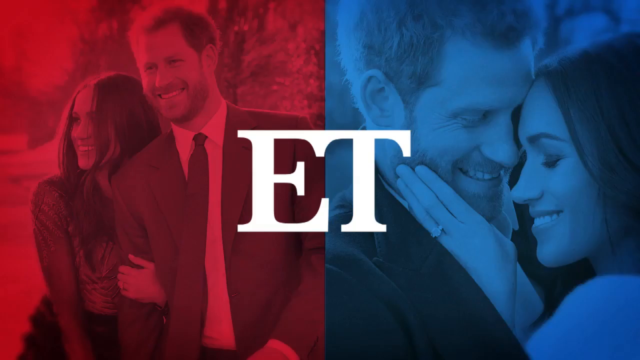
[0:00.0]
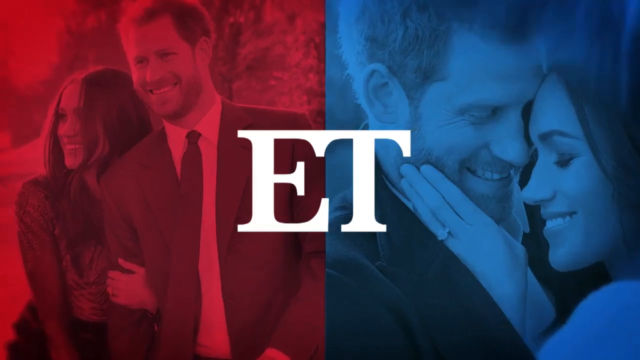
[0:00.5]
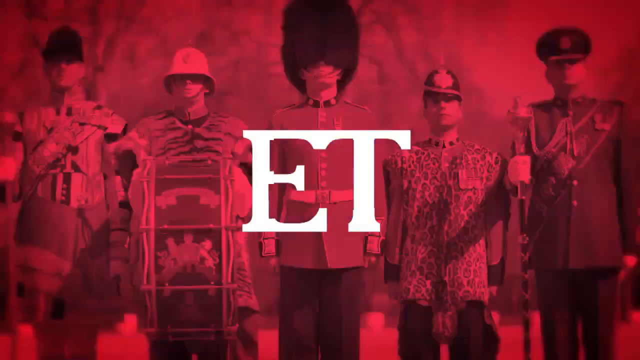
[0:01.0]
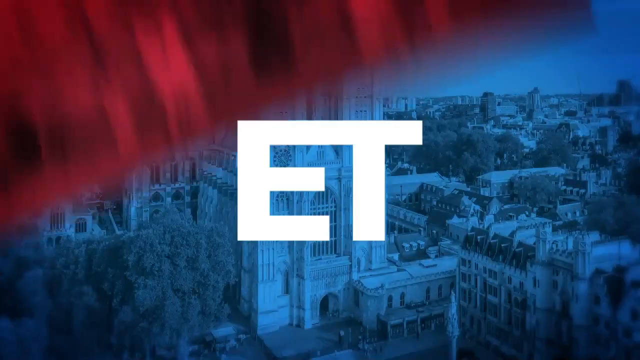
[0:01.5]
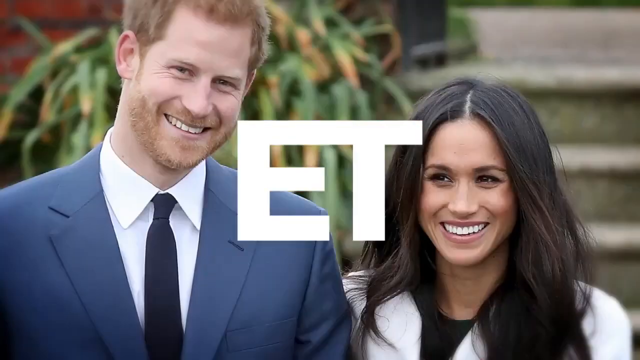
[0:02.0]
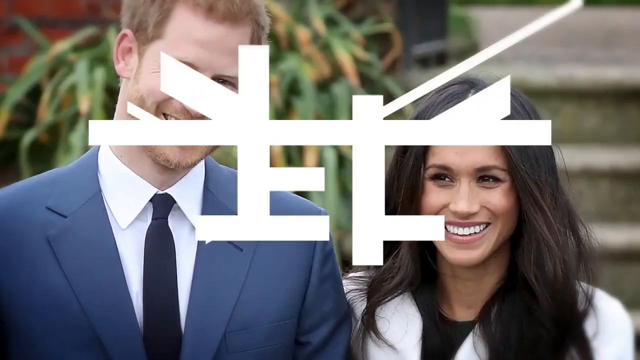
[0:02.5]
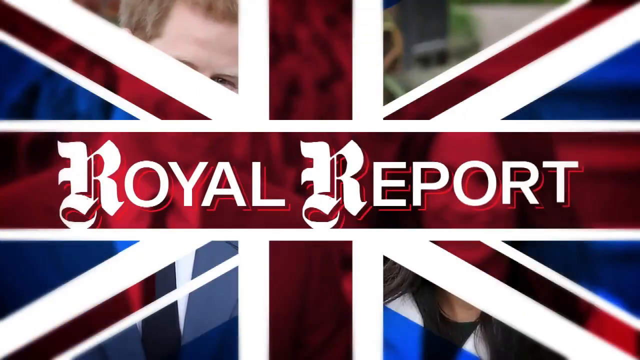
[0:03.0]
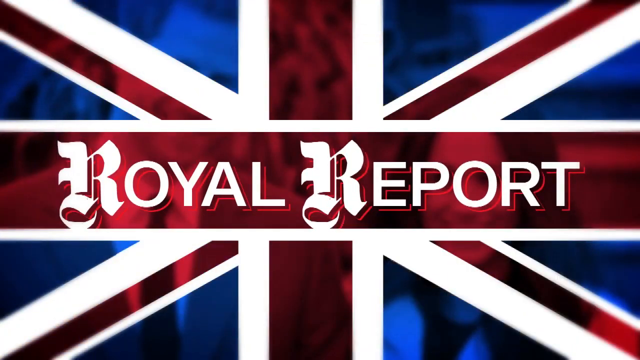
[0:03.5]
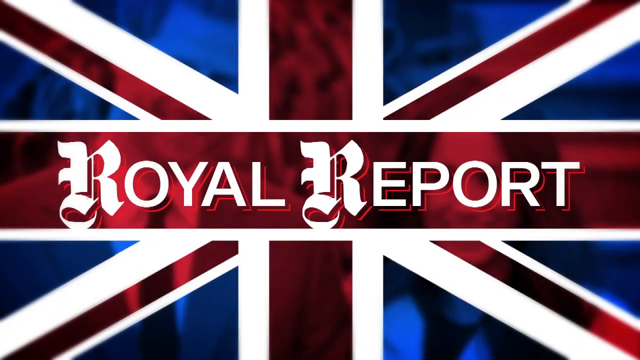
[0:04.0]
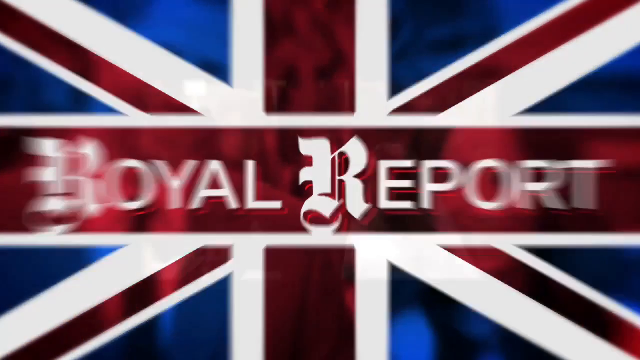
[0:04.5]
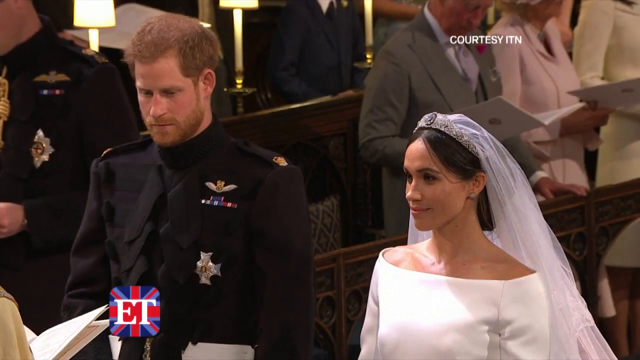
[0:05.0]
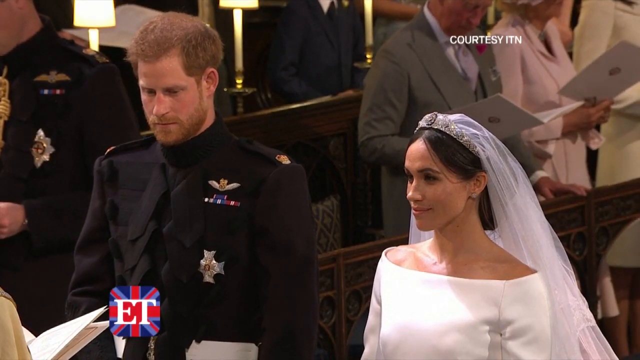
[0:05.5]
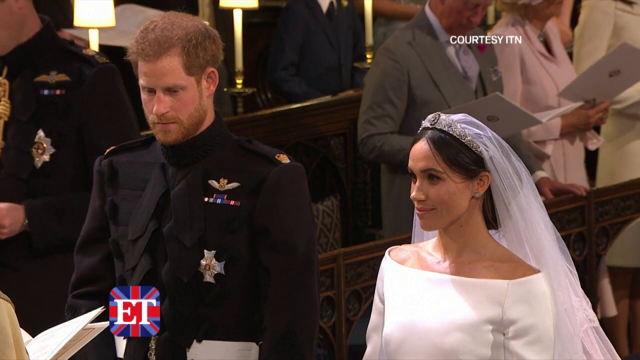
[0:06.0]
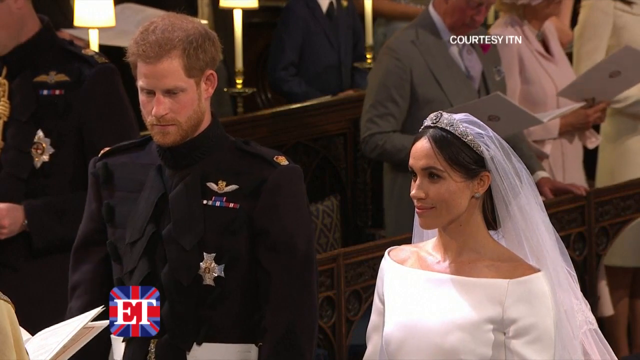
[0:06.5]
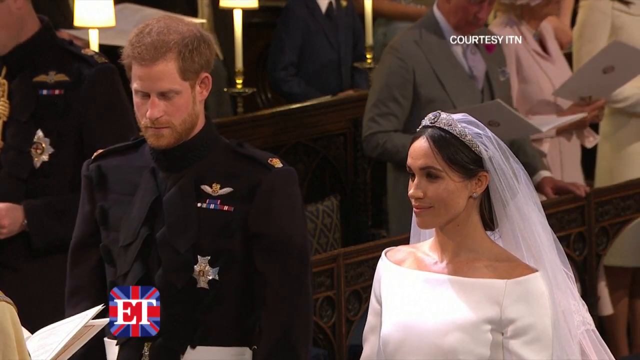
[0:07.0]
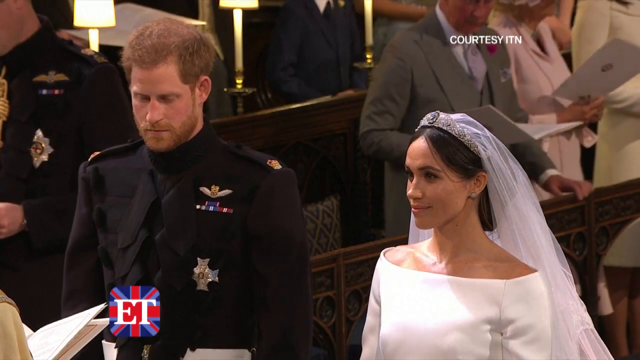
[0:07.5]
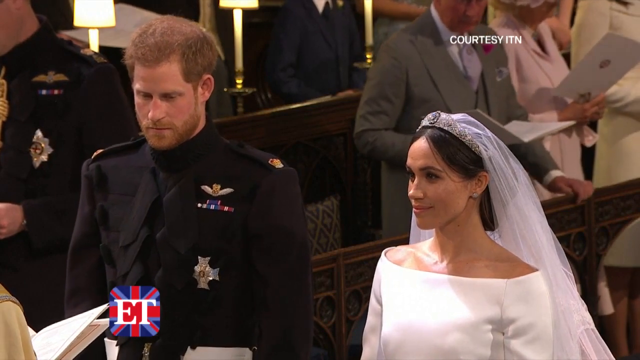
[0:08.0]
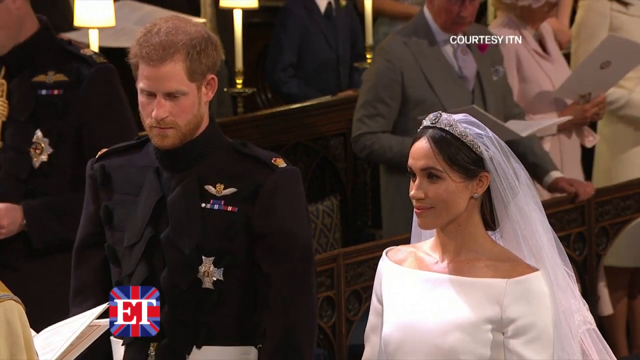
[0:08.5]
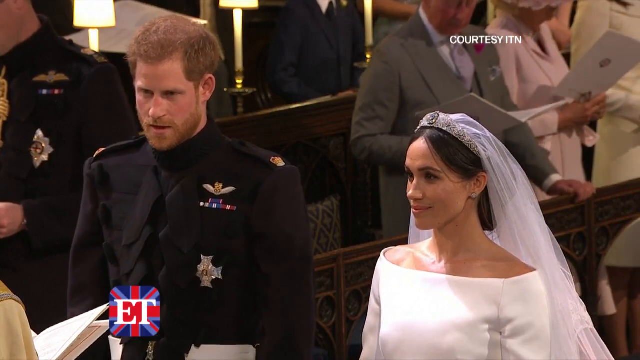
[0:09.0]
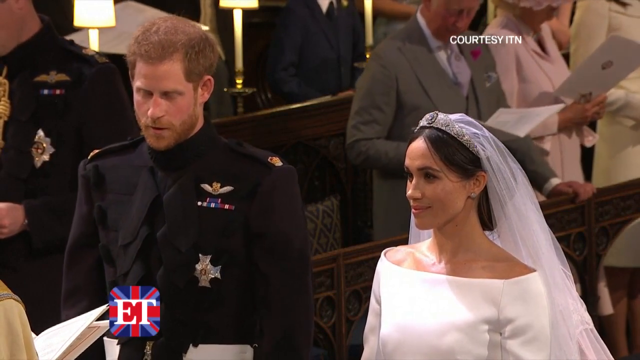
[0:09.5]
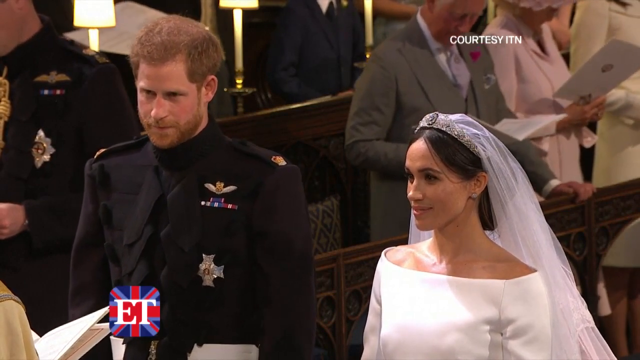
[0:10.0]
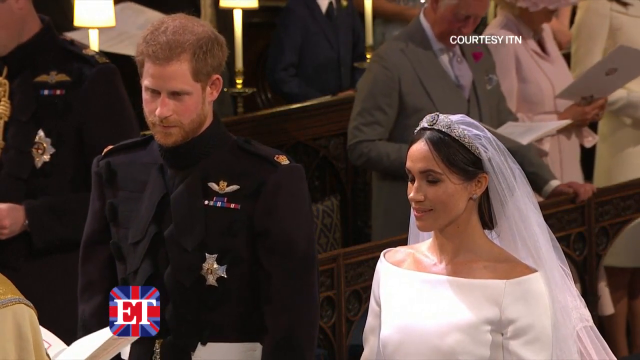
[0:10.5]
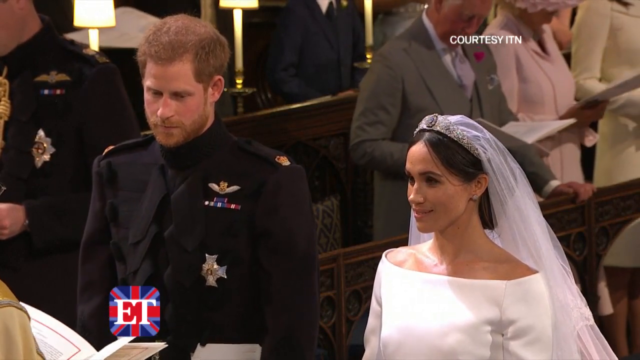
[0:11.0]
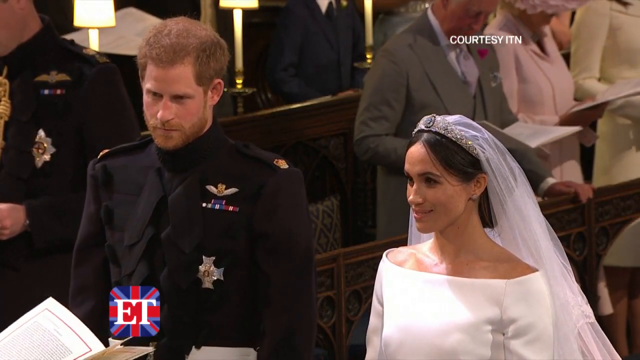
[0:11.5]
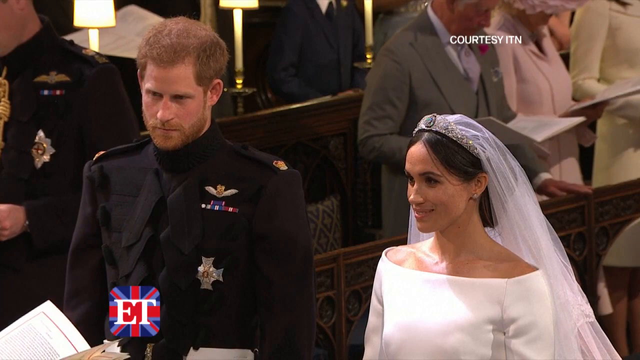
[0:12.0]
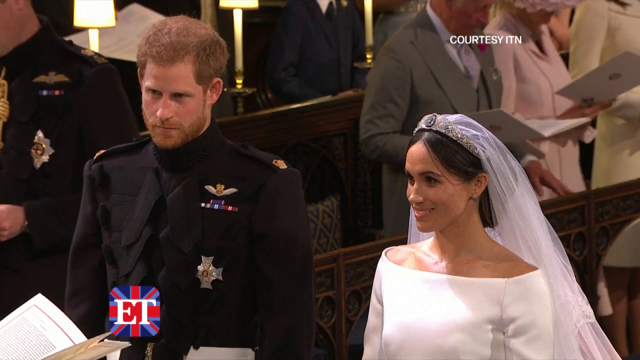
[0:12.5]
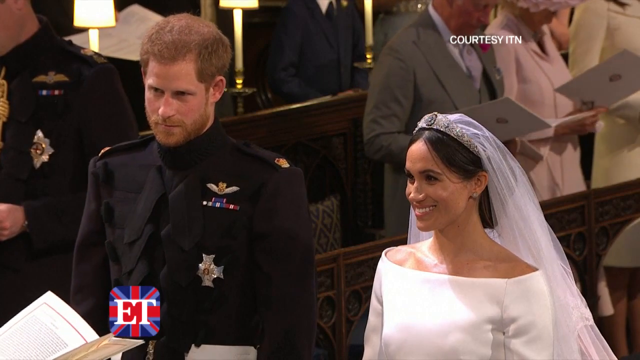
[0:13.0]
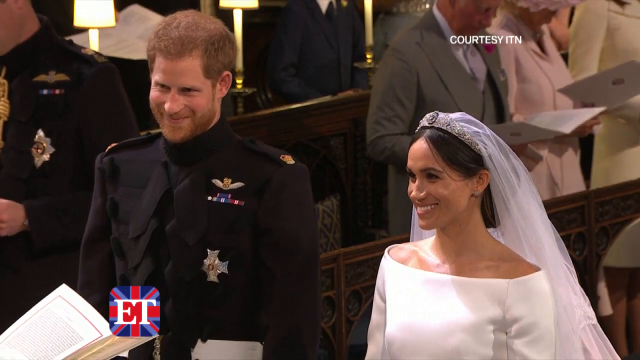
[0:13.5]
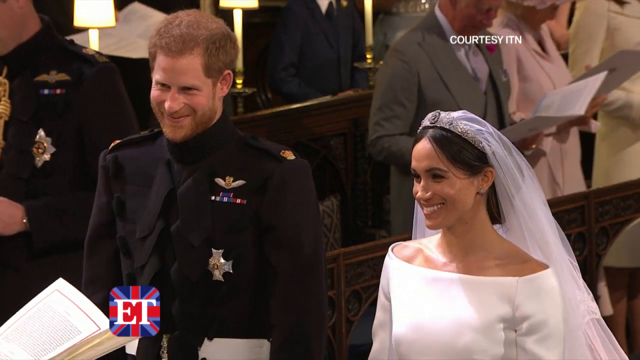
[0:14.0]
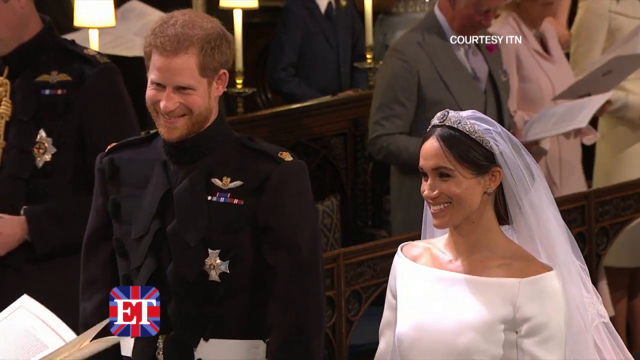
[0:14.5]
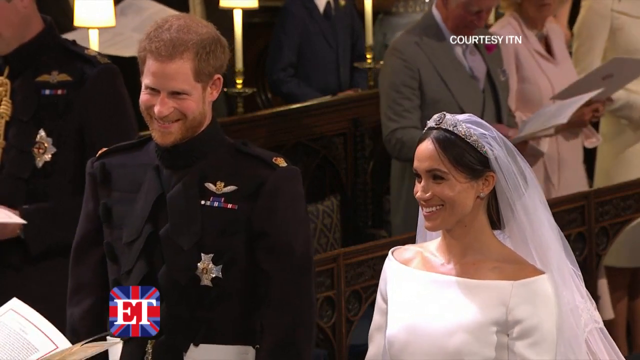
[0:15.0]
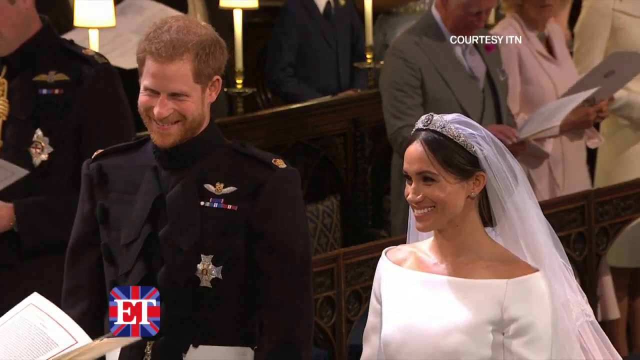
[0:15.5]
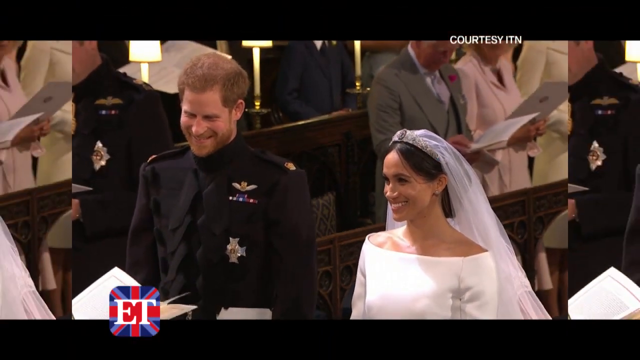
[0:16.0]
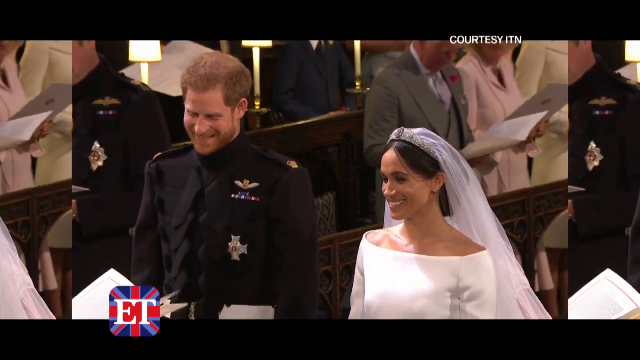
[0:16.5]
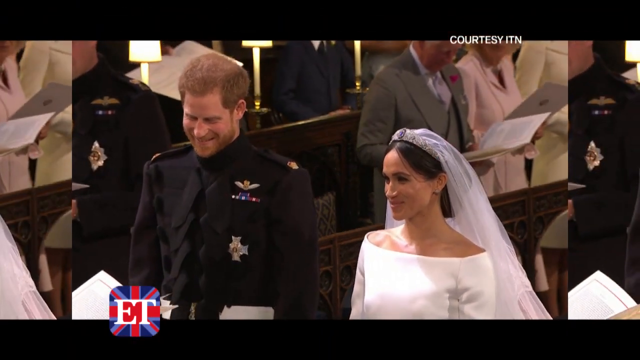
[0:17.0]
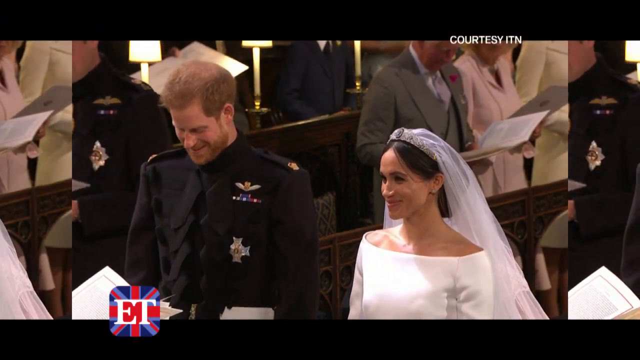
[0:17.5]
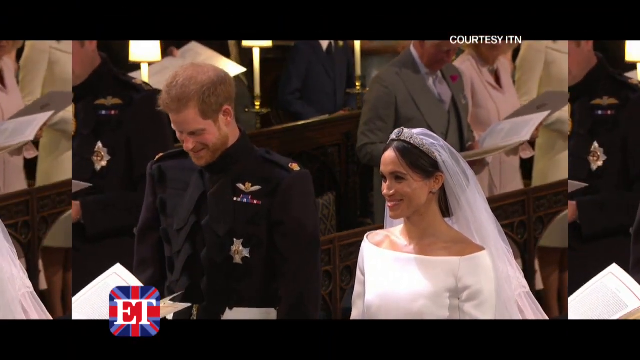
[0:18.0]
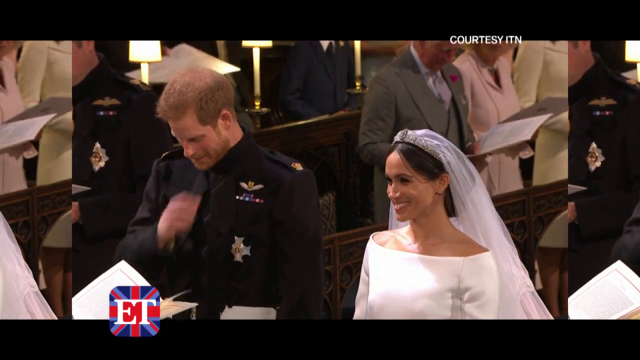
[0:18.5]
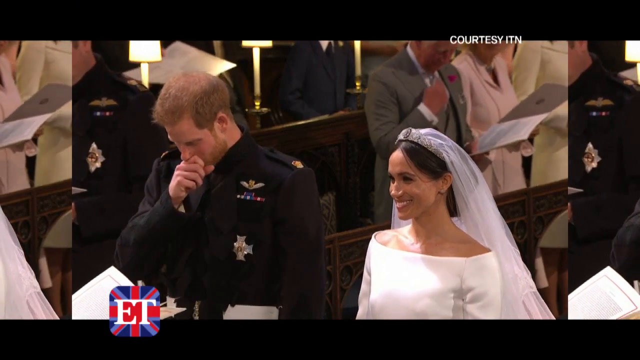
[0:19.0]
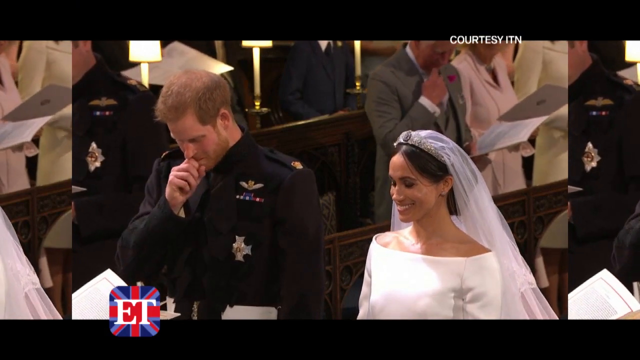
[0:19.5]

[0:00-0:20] The text "ET" appears, followed by various images of the White House. A lady and a man both face the camera, with "ET" written on screen. Next come the words "a royal report". Prince Charles and his bride are then shown at their wedding, taking their vows in a church. They are smiling, and he continues smiling throughout. The church is full of people; some are reading from their hymn books and singing, and the guests show happy faces.